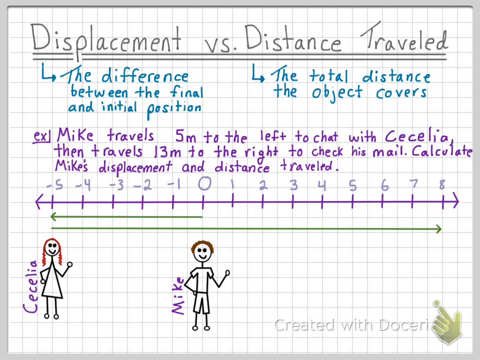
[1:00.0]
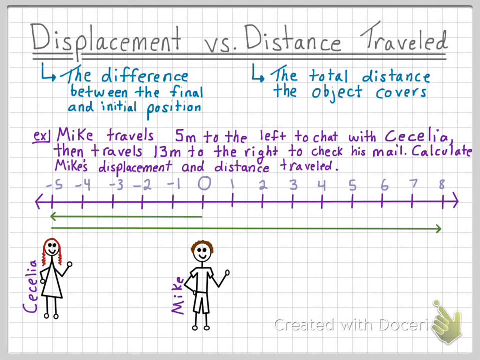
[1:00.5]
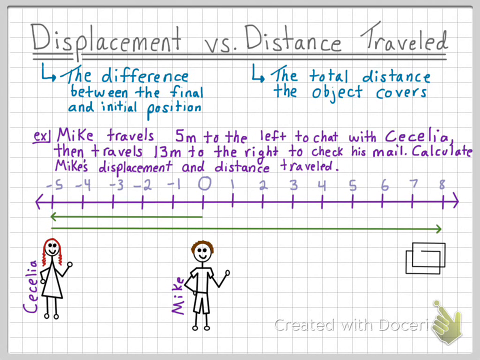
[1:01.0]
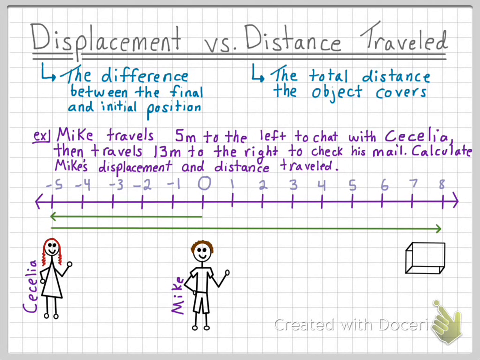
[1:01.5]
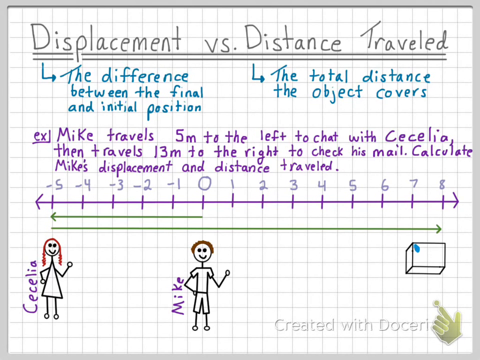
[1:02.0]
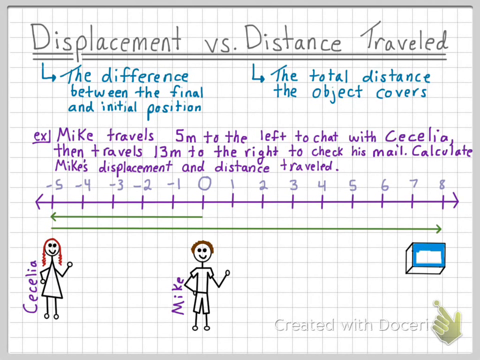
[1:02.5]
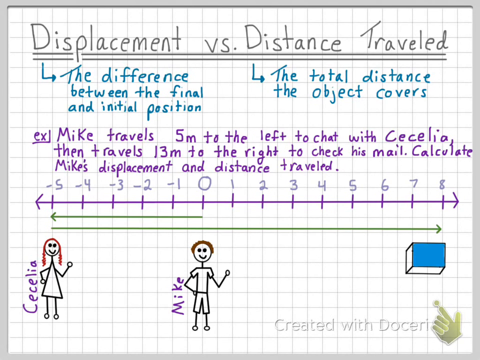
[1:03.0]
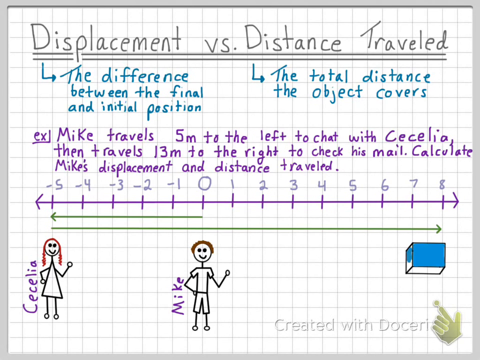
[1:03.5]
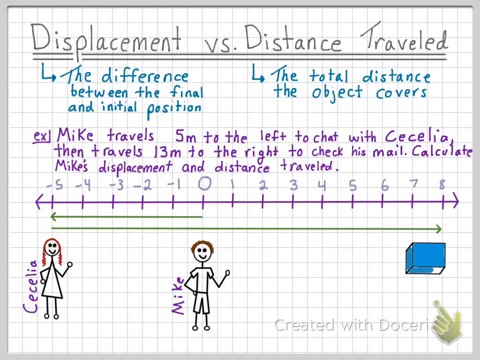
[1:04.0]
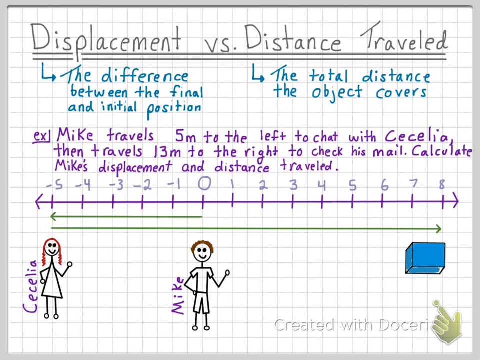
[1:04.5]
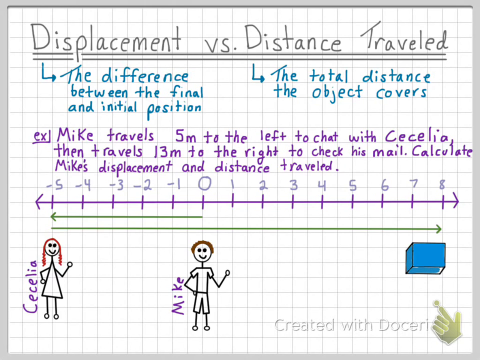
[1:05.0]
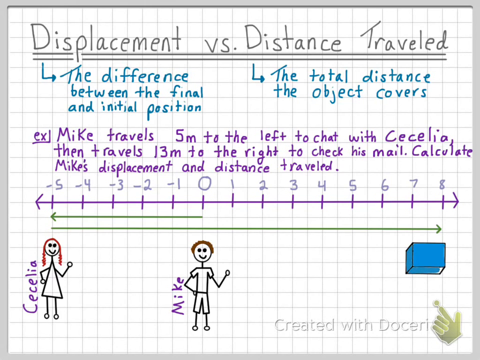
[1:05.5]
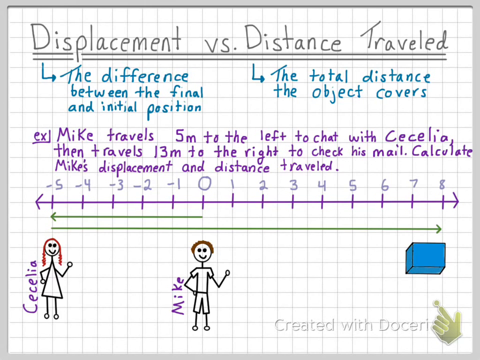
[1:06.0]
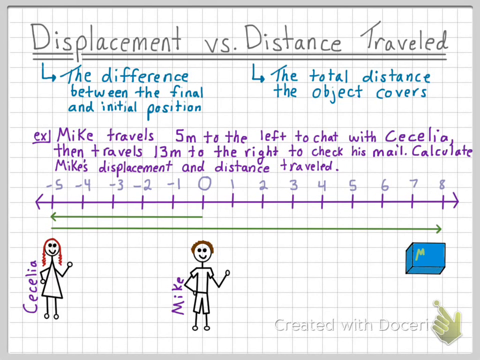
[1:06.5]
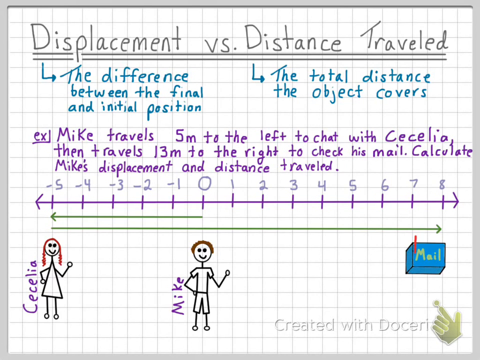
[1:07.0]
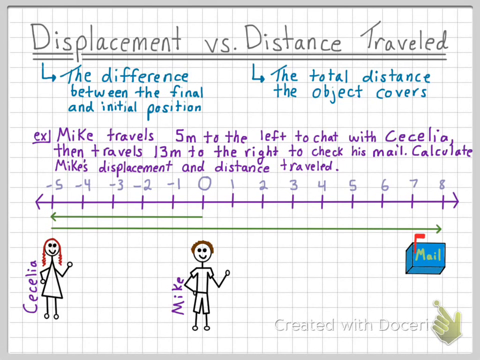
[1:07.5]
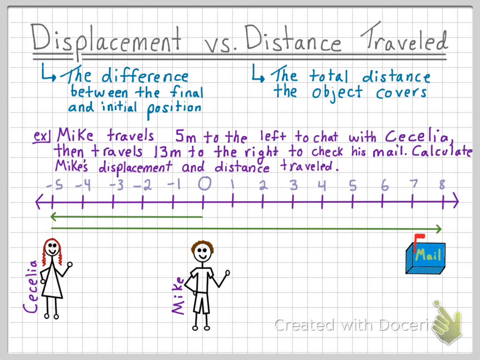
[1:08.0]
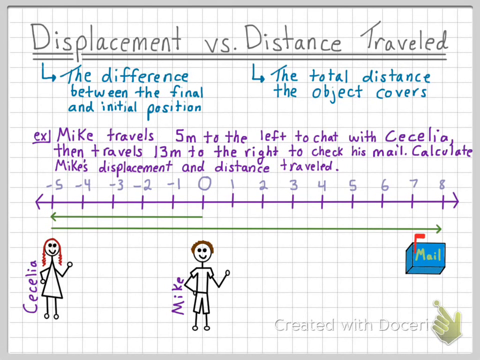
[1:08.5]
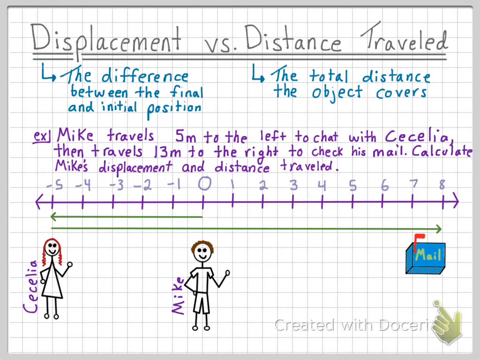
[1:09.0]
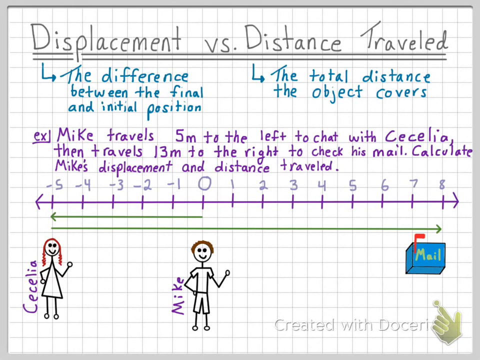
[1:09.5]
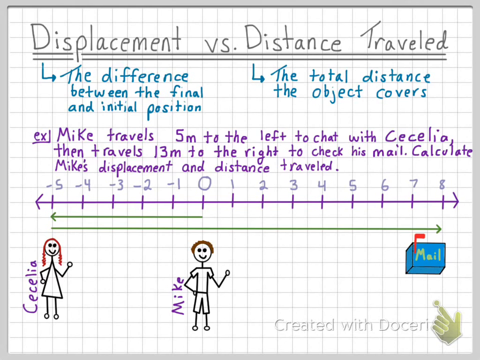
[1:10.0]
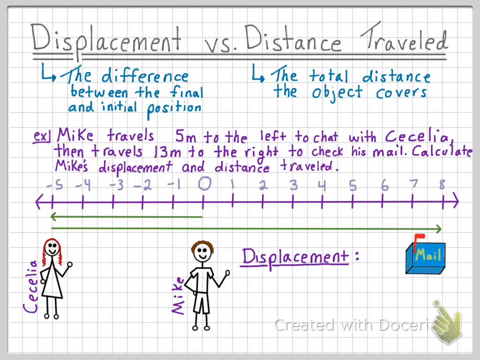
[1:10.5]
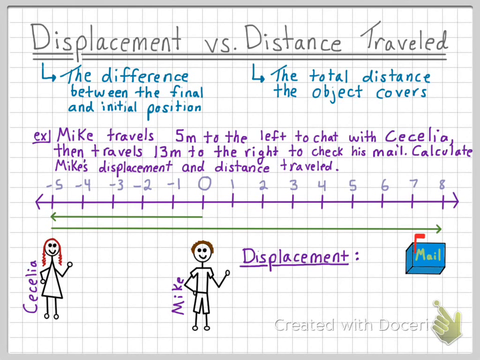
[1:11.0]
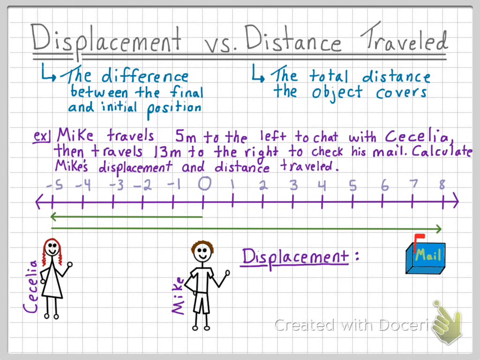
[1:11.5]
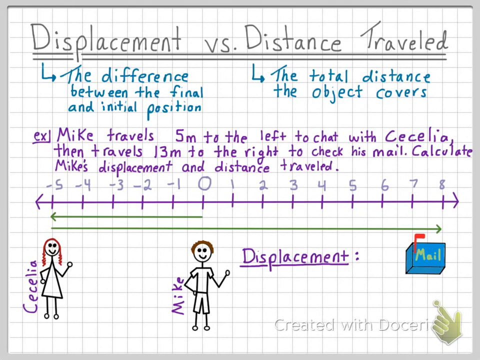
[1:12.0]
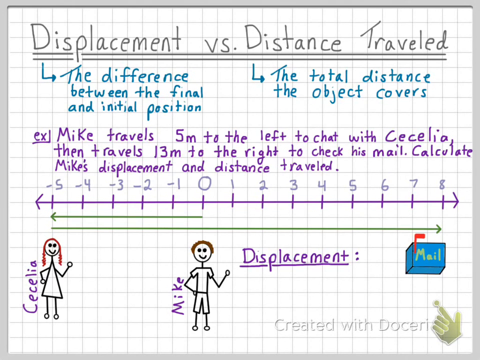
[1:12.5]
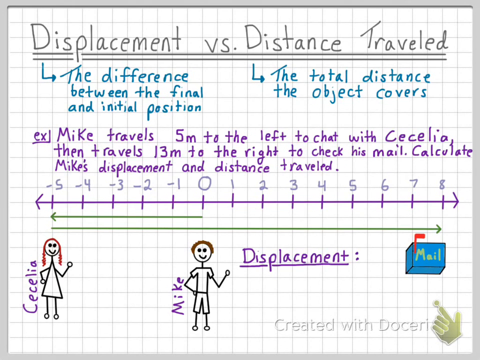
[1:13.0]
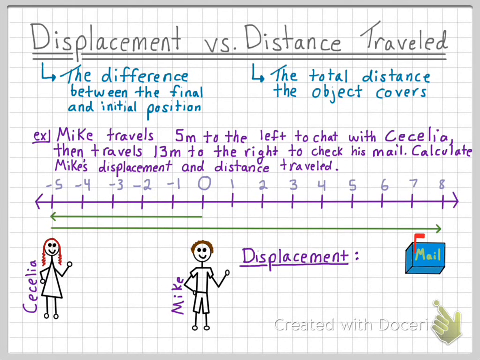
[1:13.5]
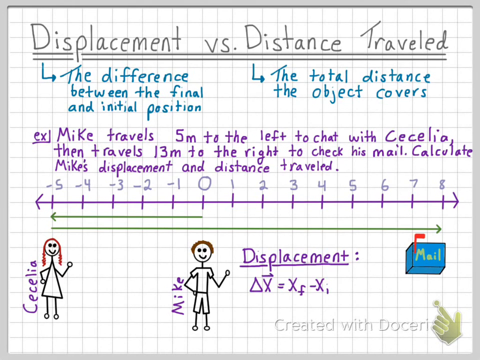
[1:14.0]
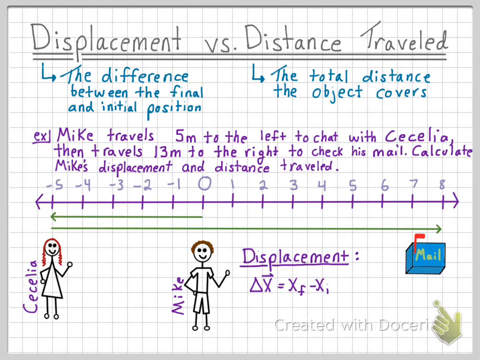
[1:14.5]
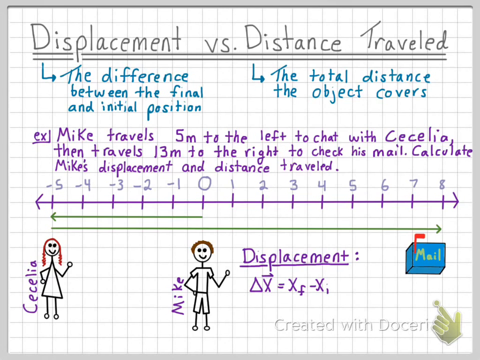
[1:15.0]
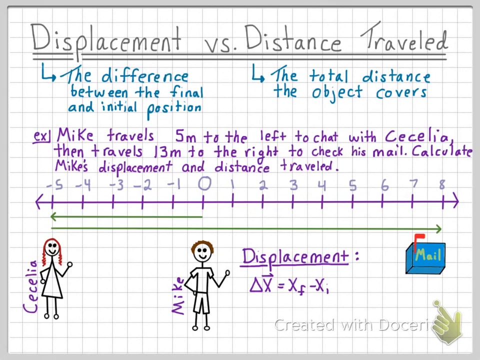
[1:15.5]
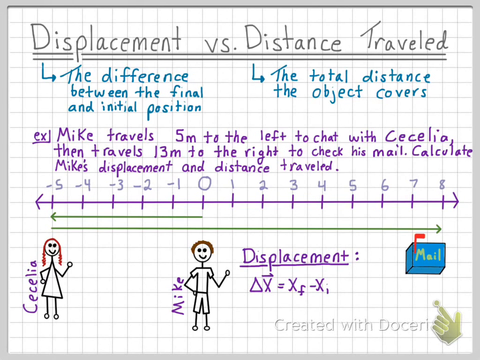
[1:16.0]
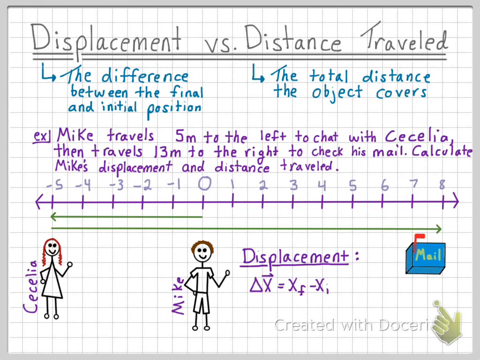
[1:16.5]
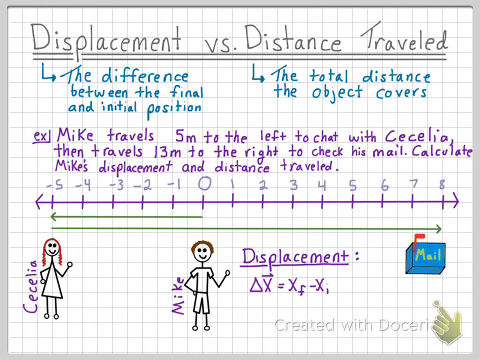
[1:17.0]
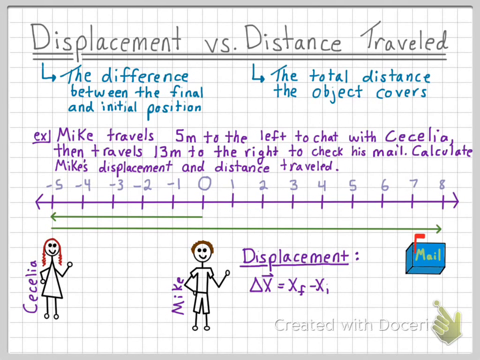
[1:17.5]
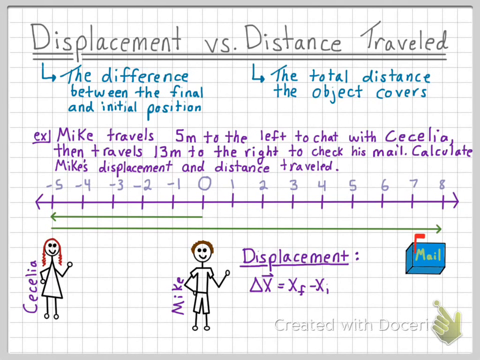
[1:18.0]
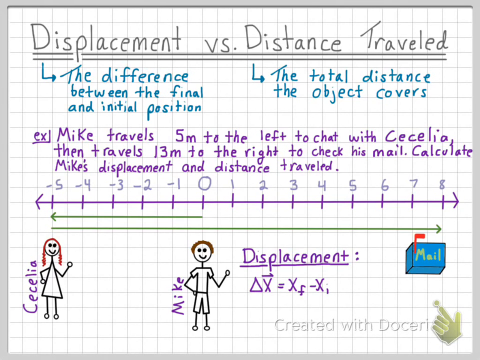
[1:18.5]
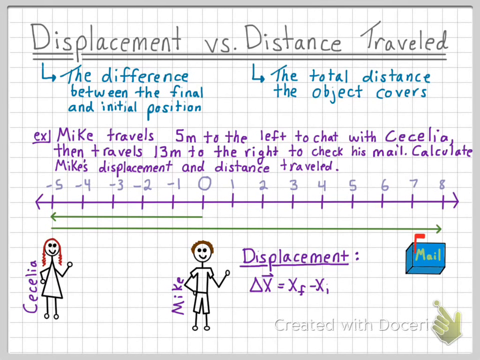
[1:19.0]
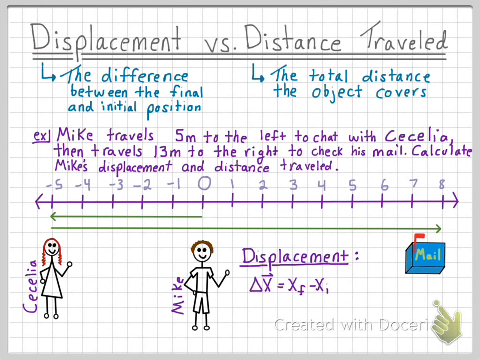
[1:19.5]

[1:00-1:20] The white grid board still holds the same information, including the Mike and Cecilia stick figures. On the right side of the line graph, a mailbox is drawn: a blue mailbox with a red flag that says "mail". It is at positive 8 on the line graph, 8 spaces to the right of Mike and 13 spaces from where Cecilia is standing. Mike's walk to the left is marked on the line graph to negative five, where Cecilia is standing, and then Mike and Cecilia together are marked walking all the way to positive eight to reach the mailbox. The line showing the movement is in green ink. The grid goes to 8 on the right but only to -5 on the left.